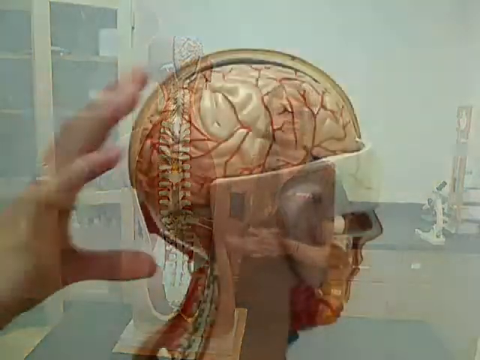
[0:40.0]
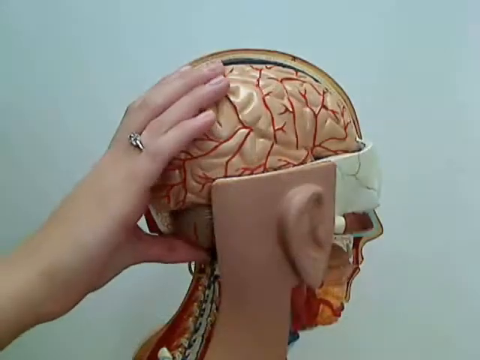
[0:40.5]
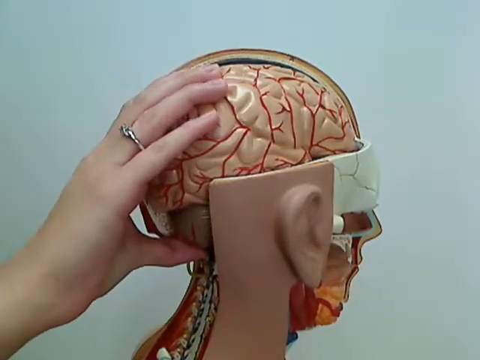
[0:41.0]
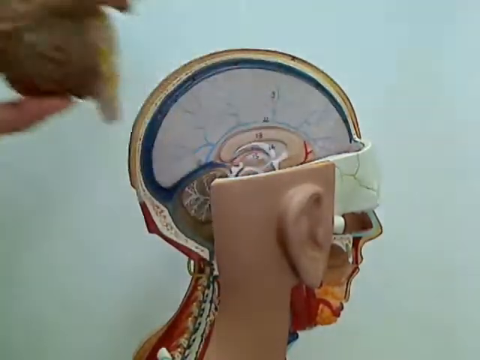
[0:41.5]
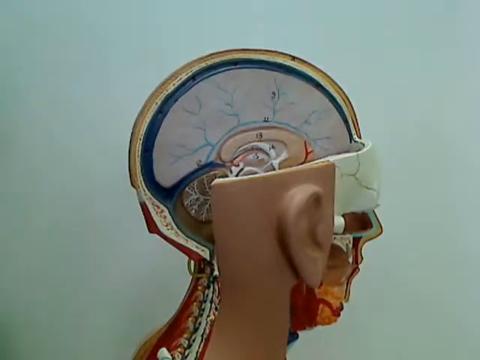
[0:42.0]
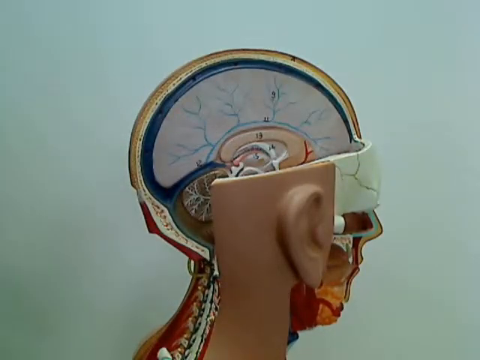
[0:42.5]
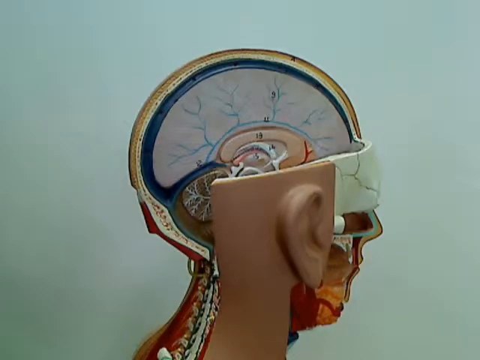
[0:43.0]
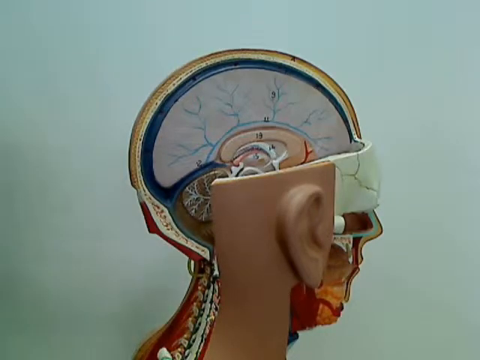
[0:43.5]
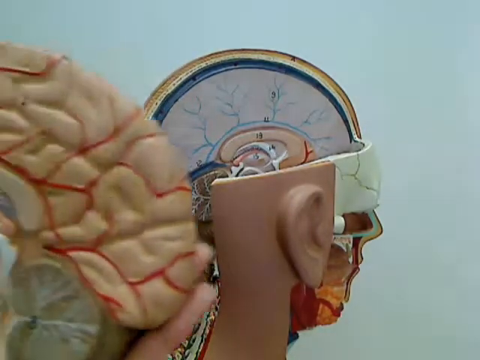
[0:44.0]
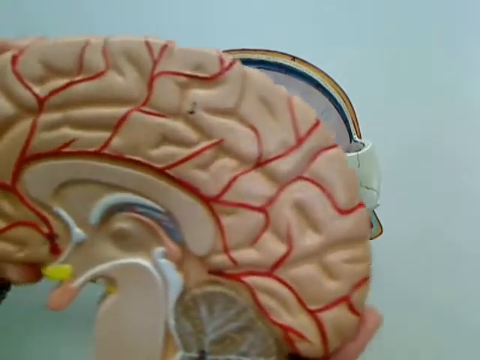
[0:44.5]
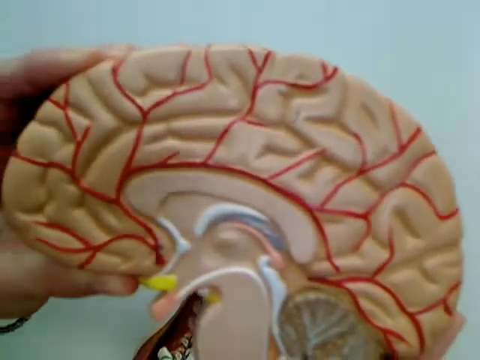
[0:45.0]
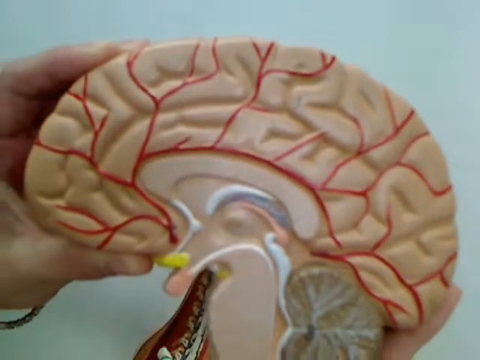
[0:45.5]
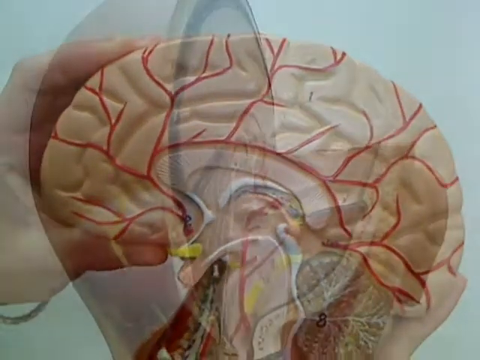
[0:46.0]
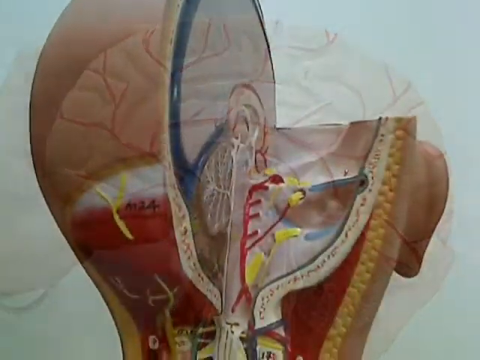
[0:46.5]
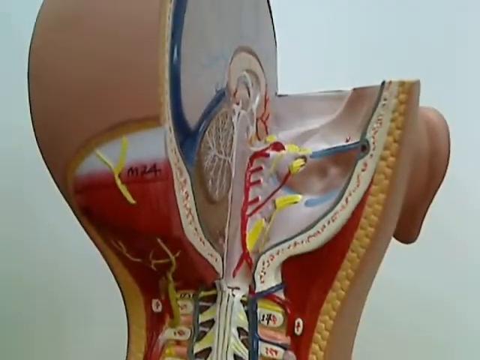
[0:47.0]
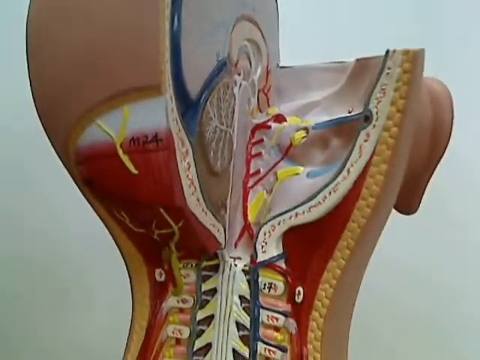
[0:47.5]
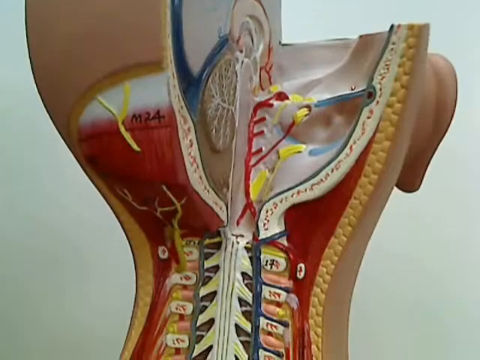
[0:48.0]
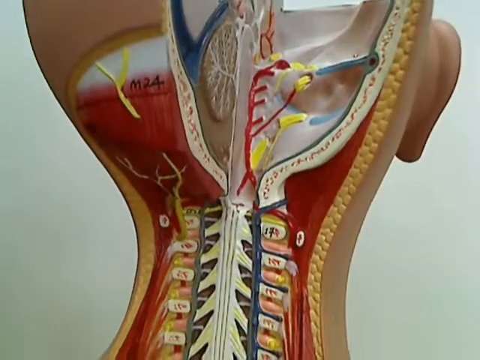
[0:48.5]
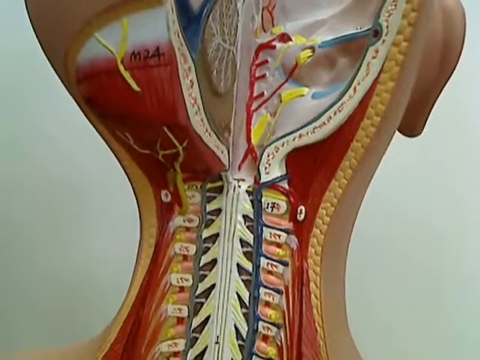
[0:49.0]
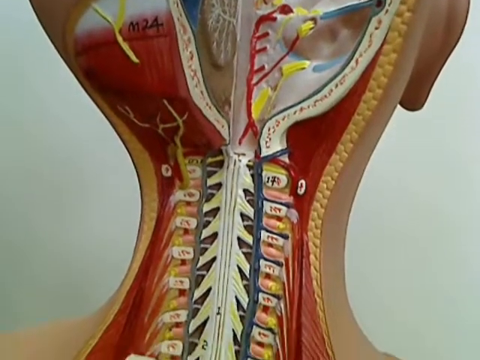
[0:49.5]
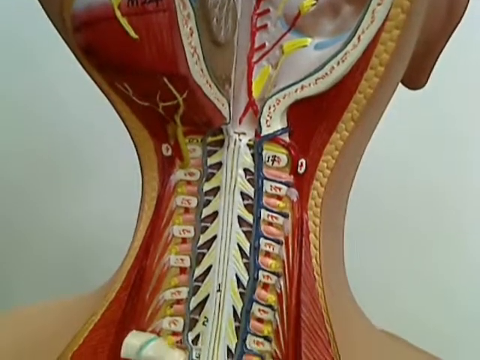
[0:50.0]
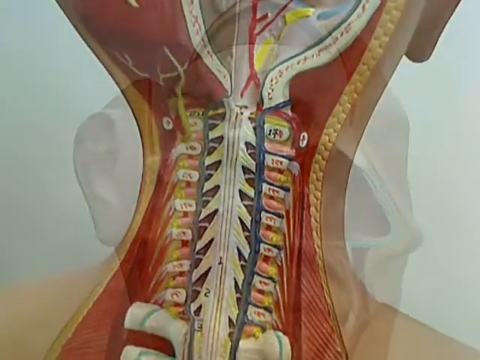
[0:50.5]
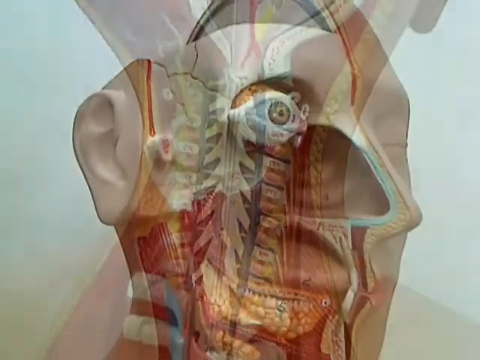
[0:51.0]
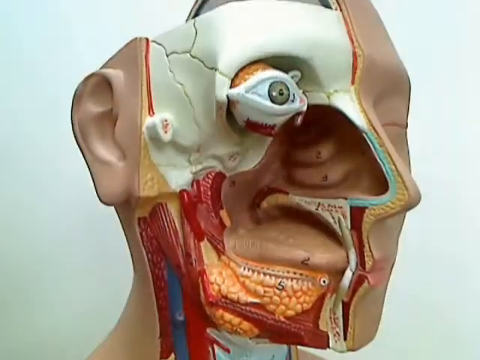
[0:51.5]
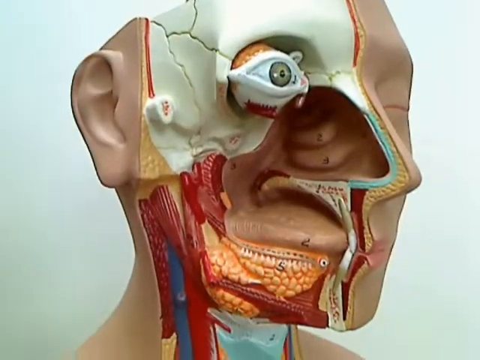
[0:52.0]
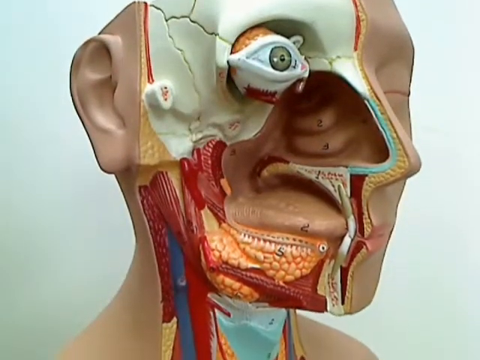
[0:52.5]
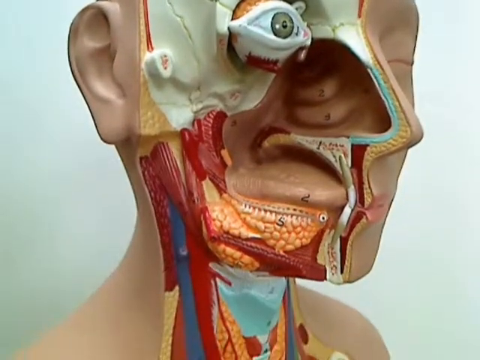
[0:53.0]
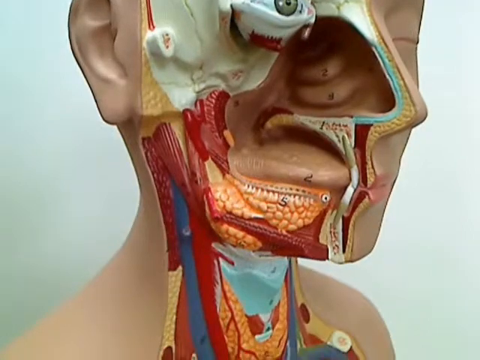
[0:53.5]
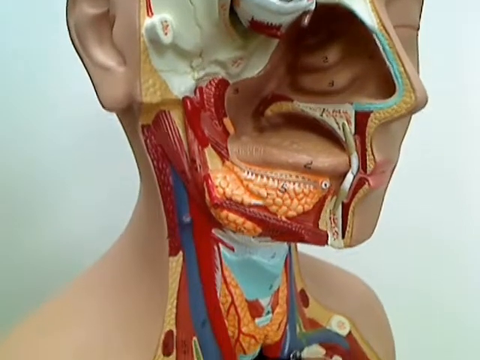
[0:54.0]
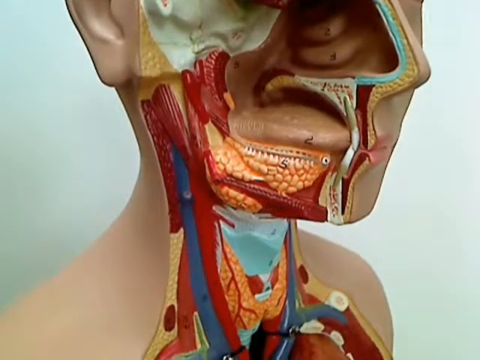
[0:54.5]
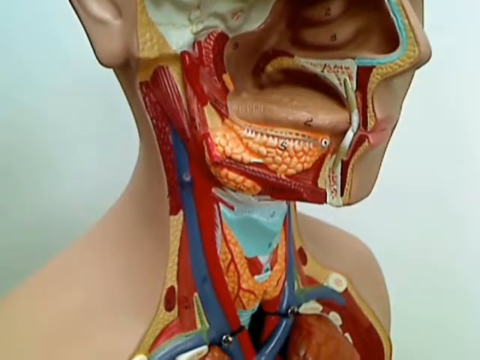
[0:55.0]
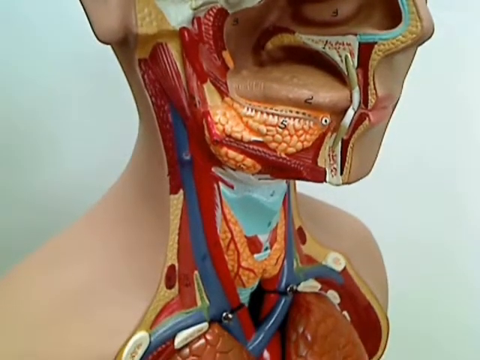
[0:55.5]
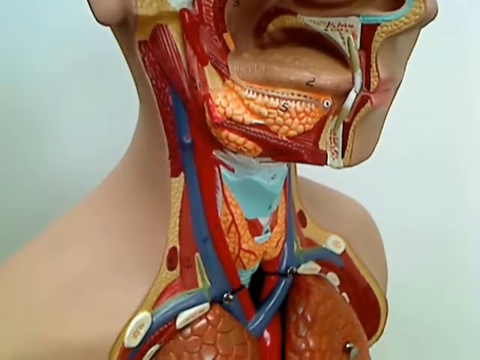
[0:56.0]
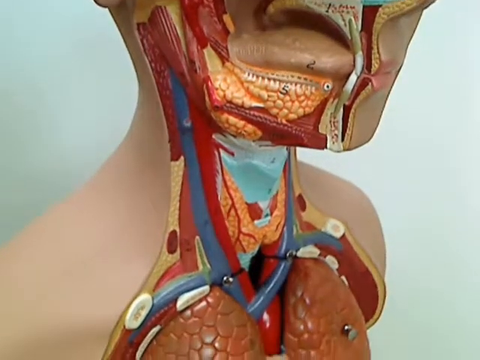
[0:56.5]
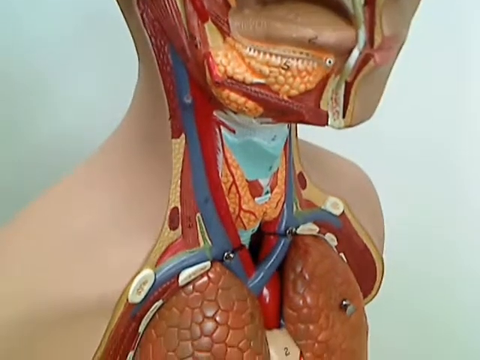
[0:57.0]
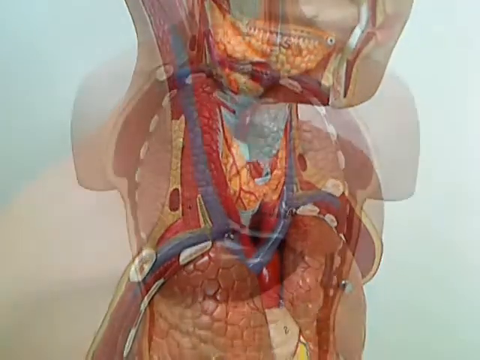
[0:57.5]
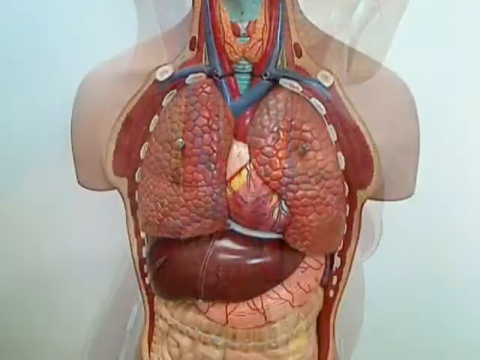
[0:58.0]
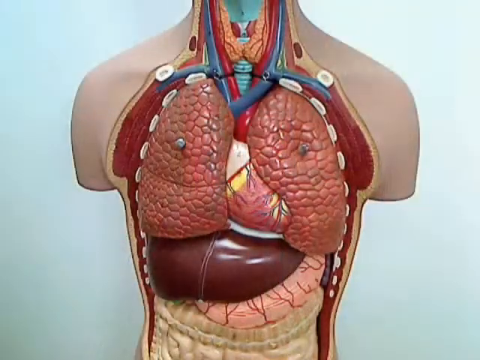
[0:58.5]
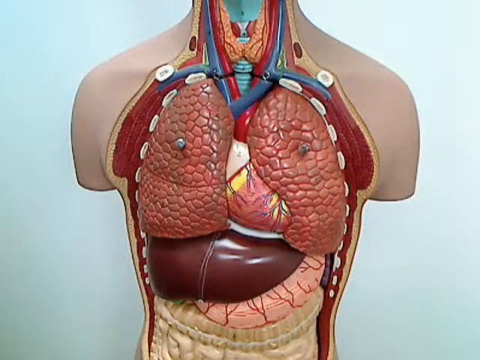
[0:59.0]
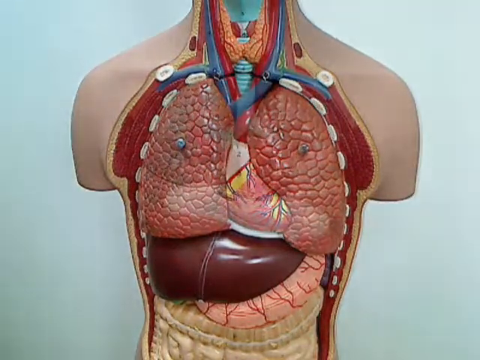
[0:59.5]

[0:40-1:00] A close-up shows the exposed right side of the mannequin's head, with the mannequin turned so its right side faces the camera. The lady's hand gestures to the back of the mannequin's head with an open-palm movement, then she grabs hold of the brain and the bottom of the back of the head and lifts it up and out of the skull. This reveals a deeper layer of the inside of the brain: white brain matter, with blue, veiny-looking branches that expand upward from an almost solid blue line in the middle of the brain. There is also a dark blue patch between the white of the brain and the skull, and other smaller parts of the inside of the brain are shown. She then moves the part she picked up in front of the camera for a very close-up view of how it looks.